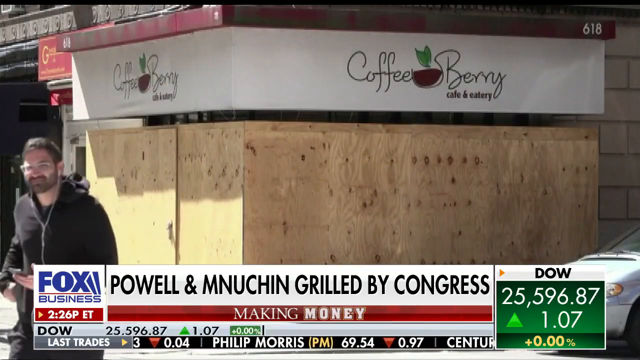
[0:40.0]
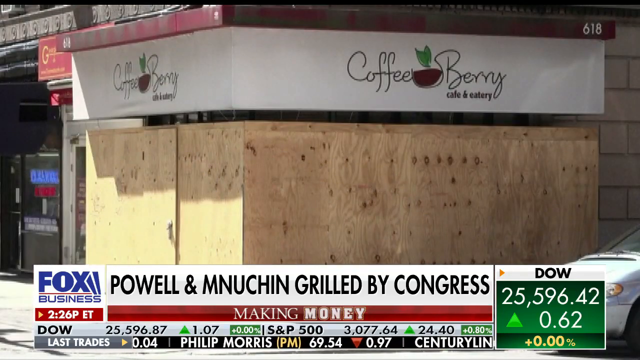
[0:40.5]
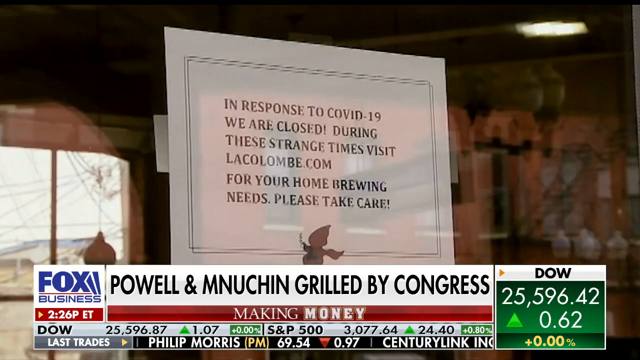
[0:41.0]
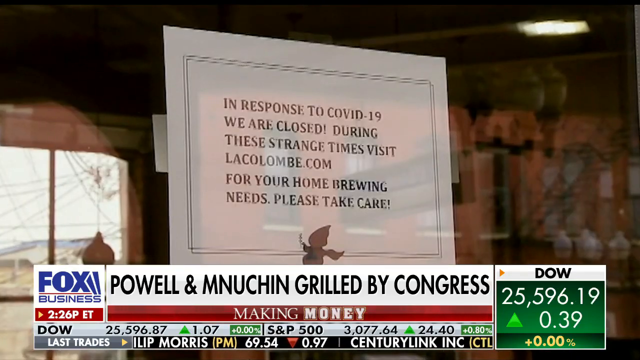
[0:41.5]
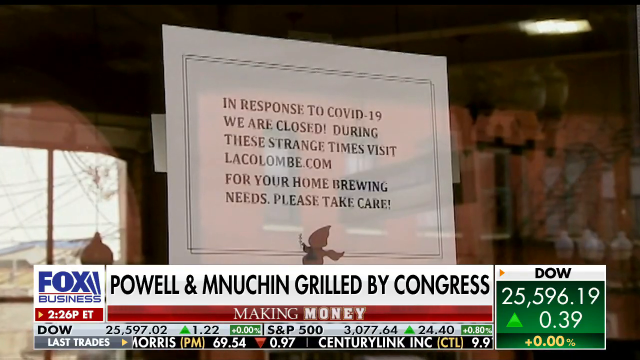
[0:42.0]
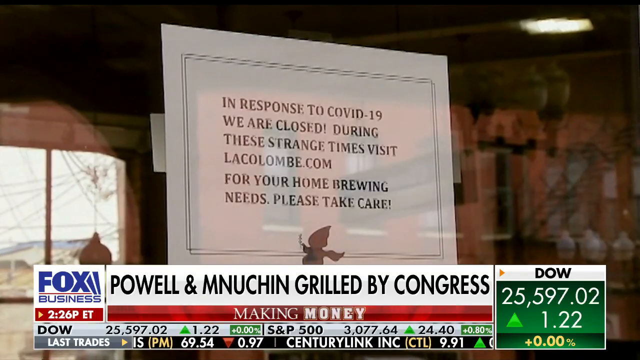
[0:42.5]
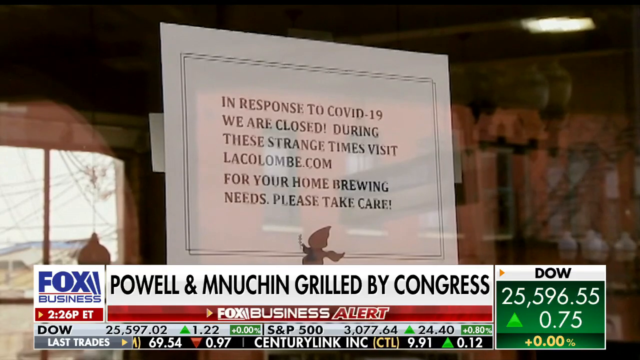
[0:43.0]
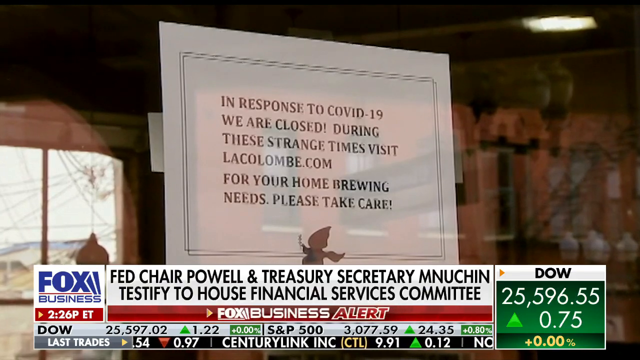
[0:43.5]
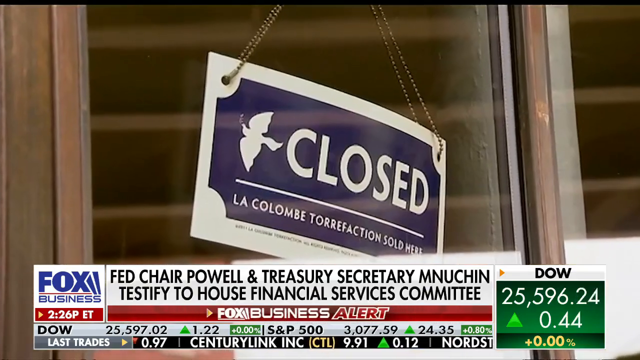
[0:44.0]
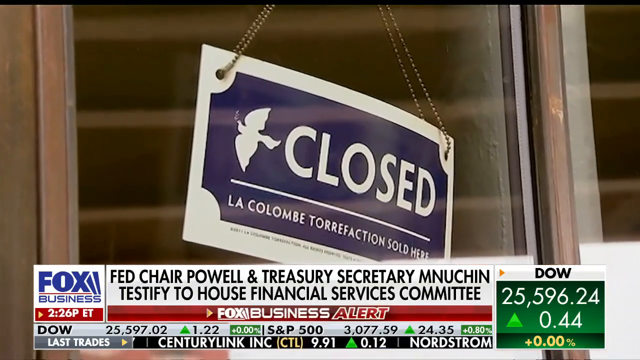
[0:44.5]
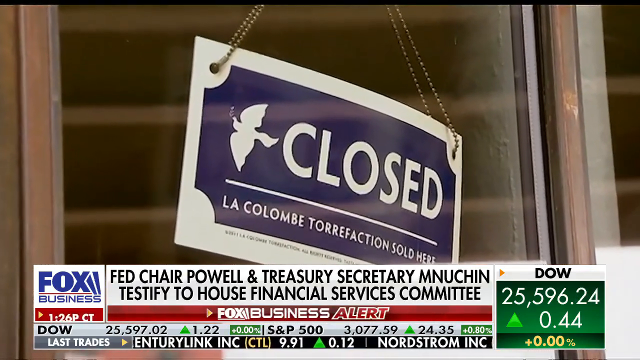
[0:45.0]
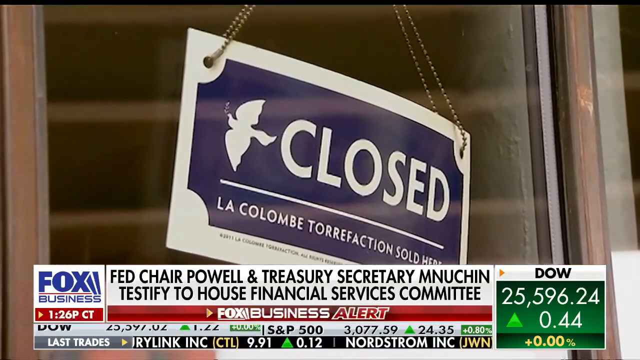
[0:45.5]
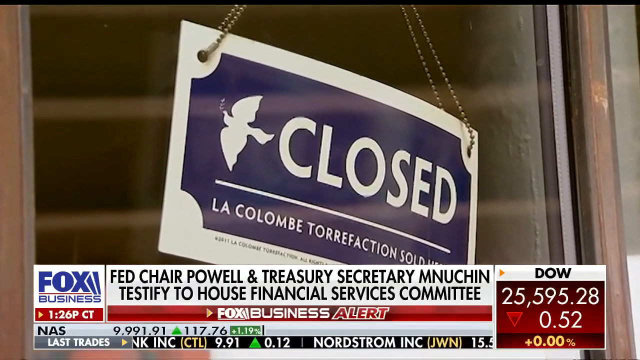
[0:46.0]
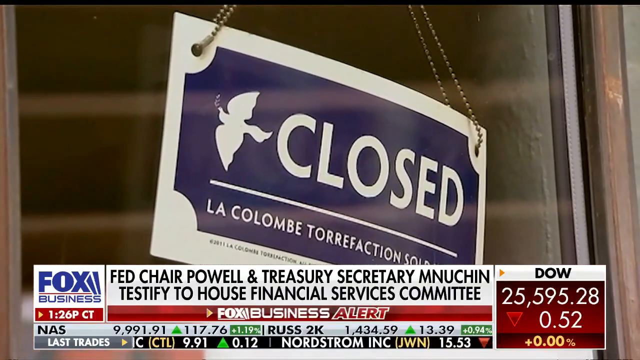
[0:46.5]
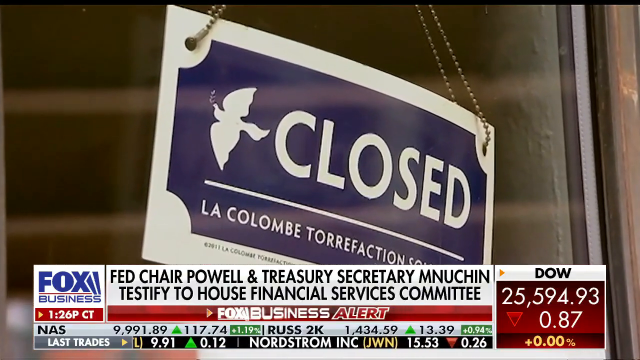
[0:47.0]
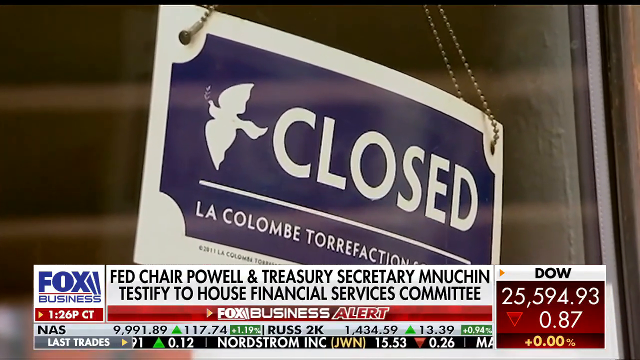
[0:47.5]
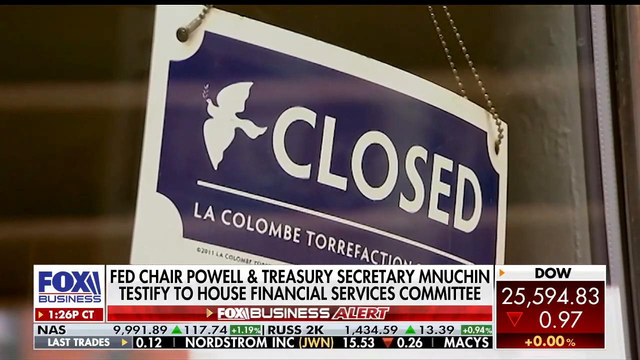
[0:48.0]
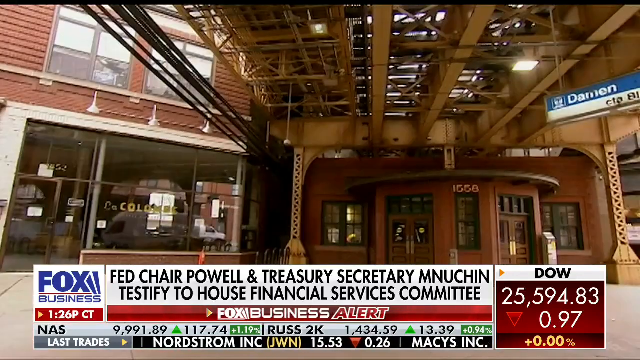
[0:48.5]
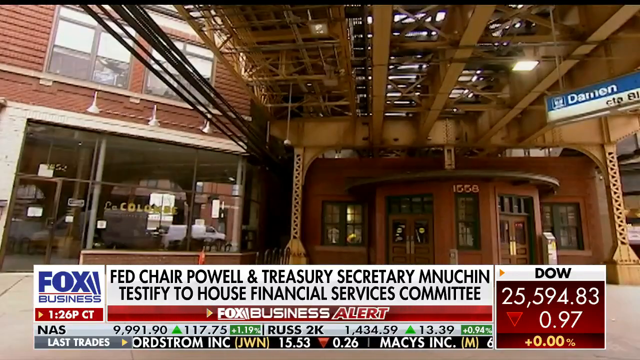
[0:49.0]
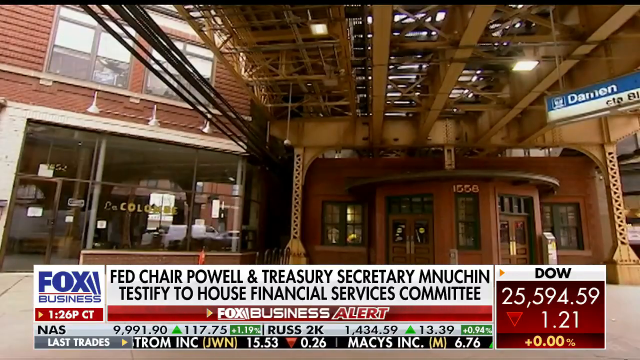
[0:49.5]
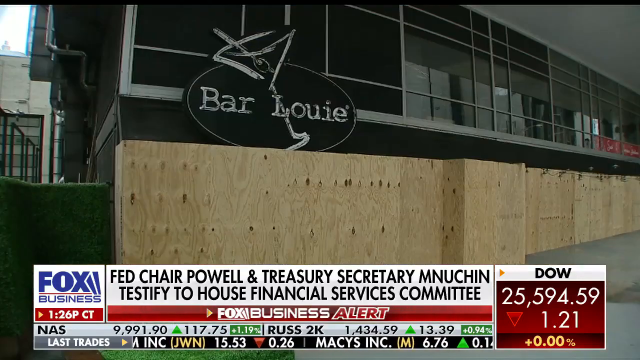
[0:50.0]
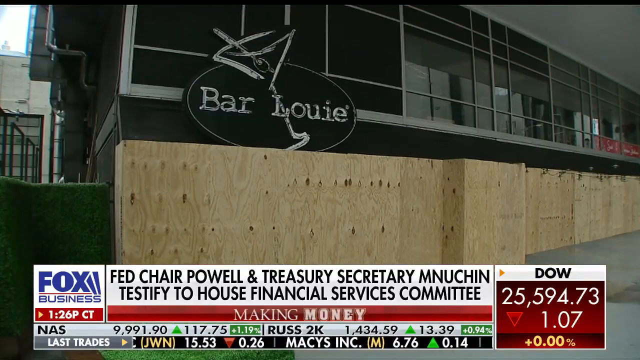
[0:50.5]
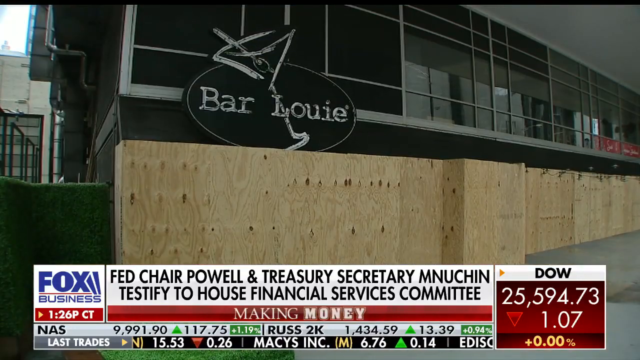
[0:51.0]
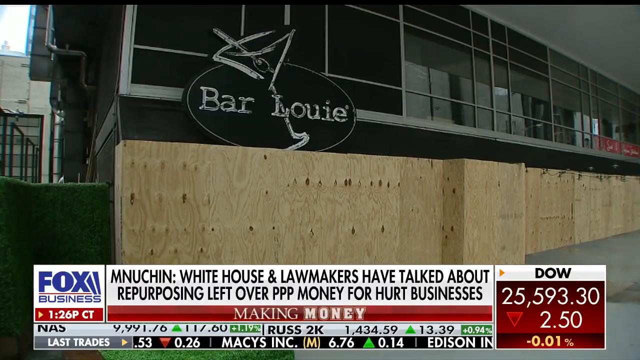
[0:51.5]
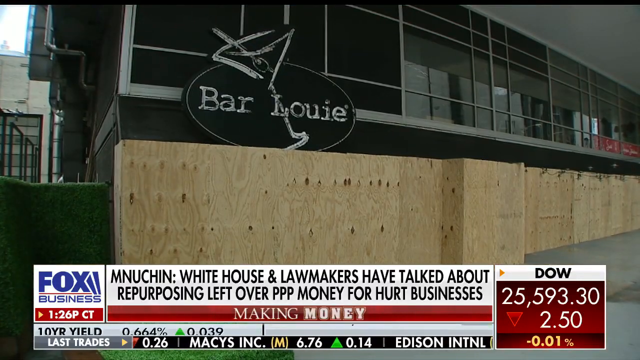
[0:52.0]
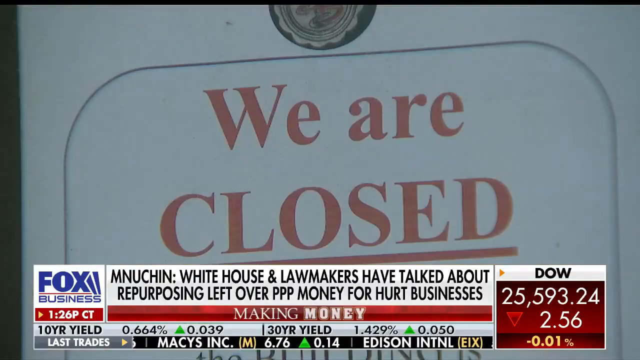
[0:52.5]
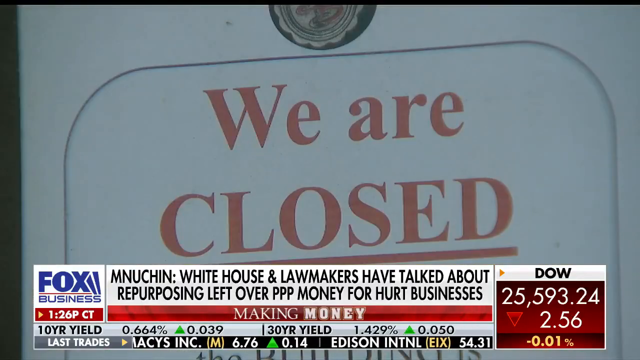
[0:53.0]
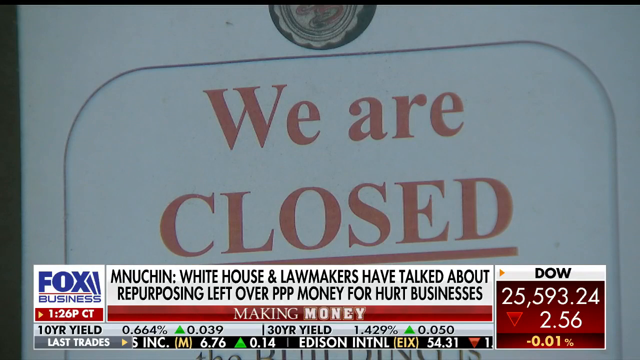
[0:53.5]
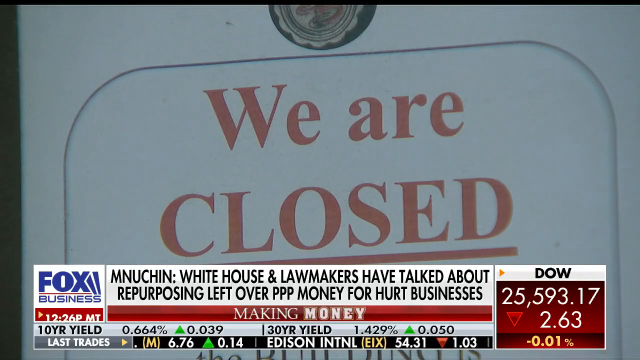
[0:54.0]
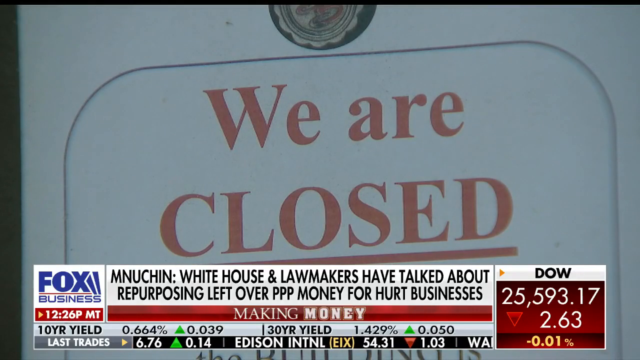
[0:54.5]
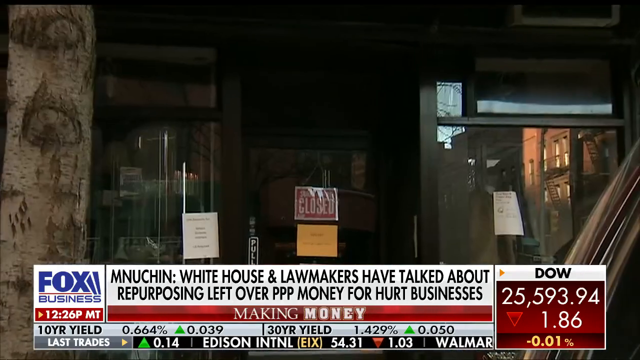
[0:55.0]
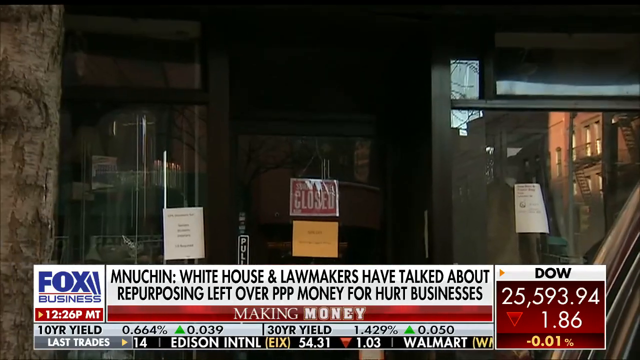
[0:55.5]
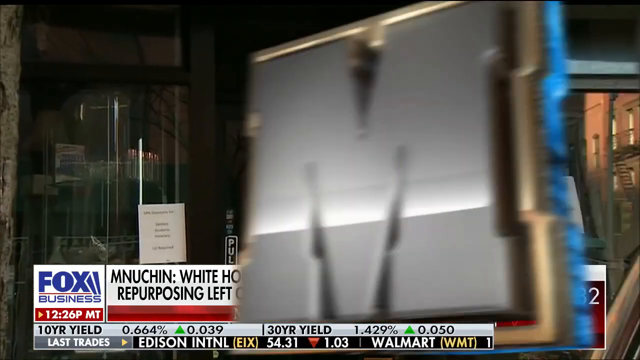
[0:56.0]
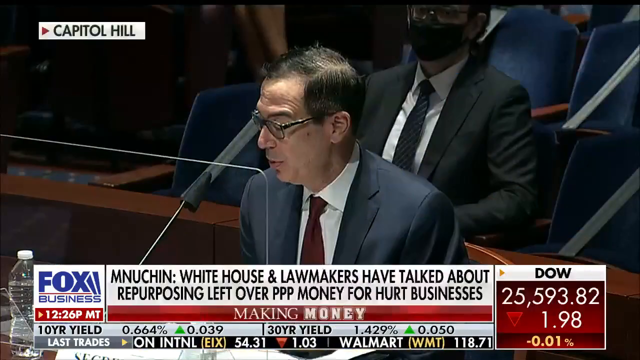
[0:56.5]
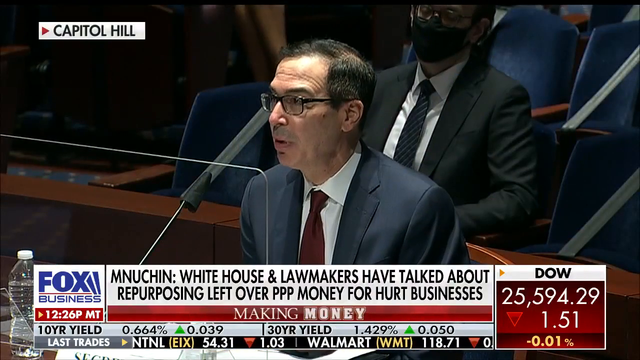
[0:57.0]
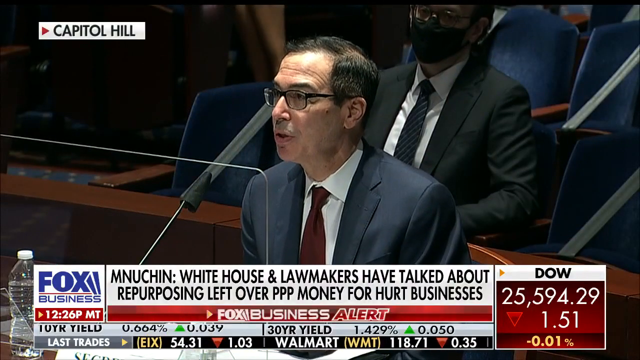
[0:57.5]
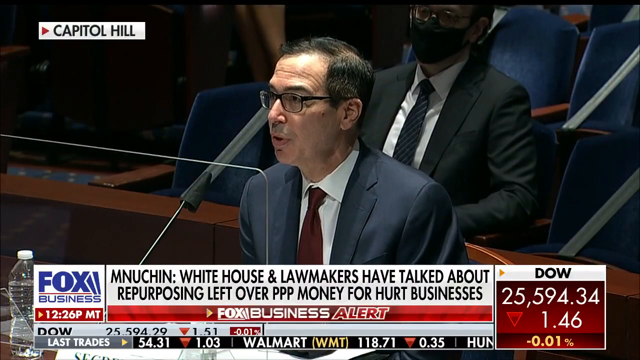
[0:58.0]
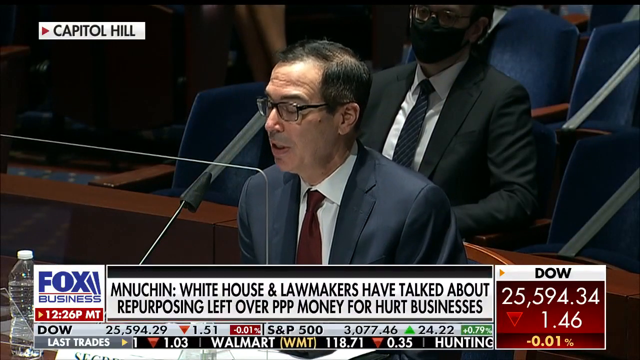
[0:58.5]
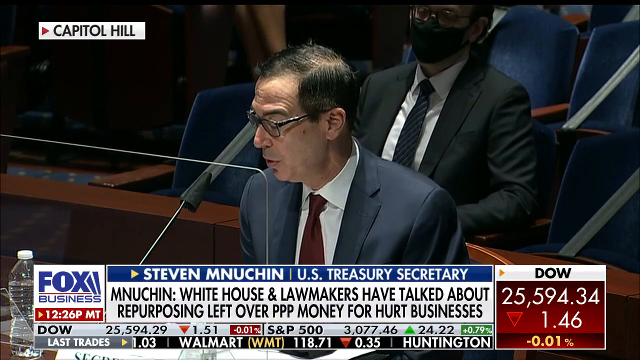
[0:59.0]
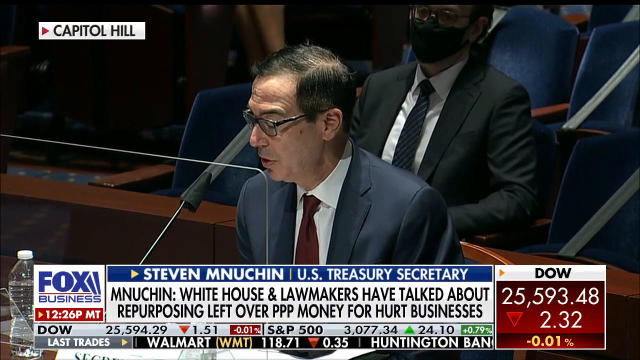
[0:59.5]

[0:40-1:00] On-screen text from the coffee shops says they "were closed during these strange times" in response to COVID-19, followed by "Visit lacolombe.com for your home brewing needs. Please take care." Several different coffee shops are shown closed, with the camera zooming in and panning onto closed signs; different bars and local businesses are also shown closed. The video then pans back to the Congress meeting, with the headline "Mnuchin, White House and lawmakers have talked about repurposing leftover PPP money for hurt businesses", as a man talks in Congress.